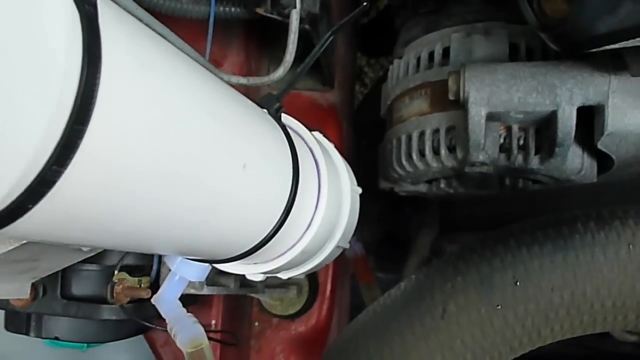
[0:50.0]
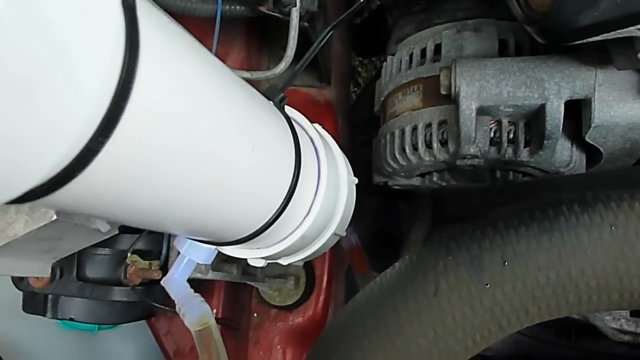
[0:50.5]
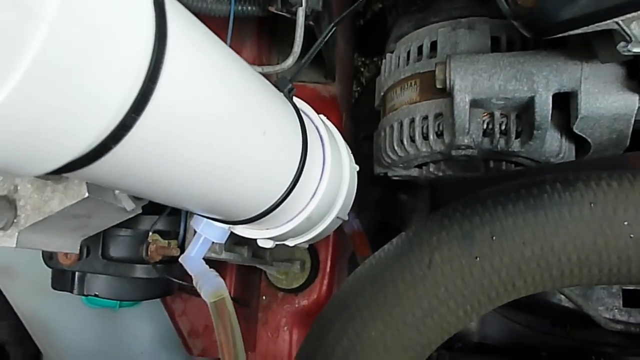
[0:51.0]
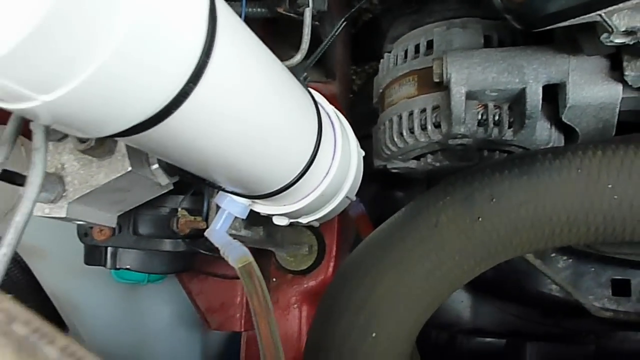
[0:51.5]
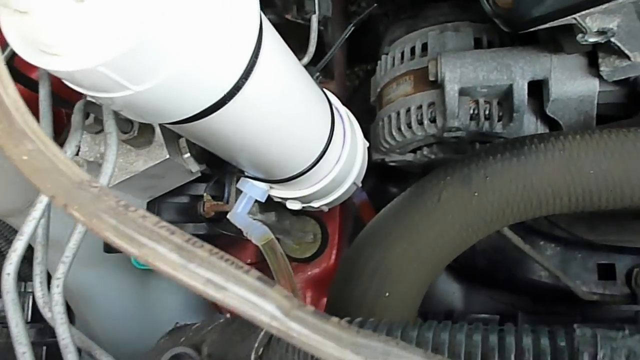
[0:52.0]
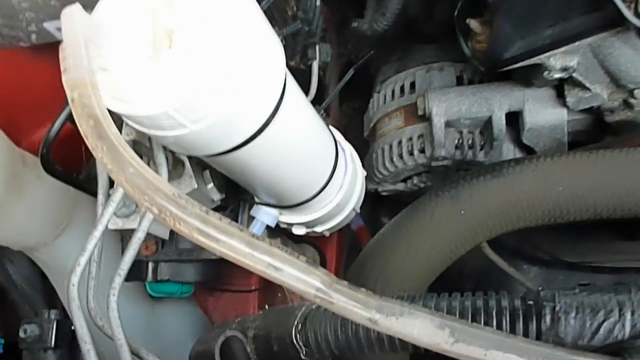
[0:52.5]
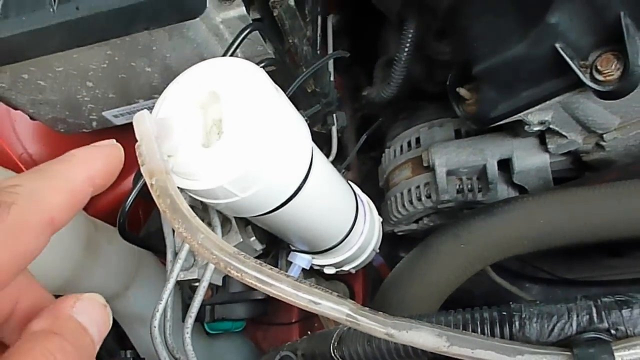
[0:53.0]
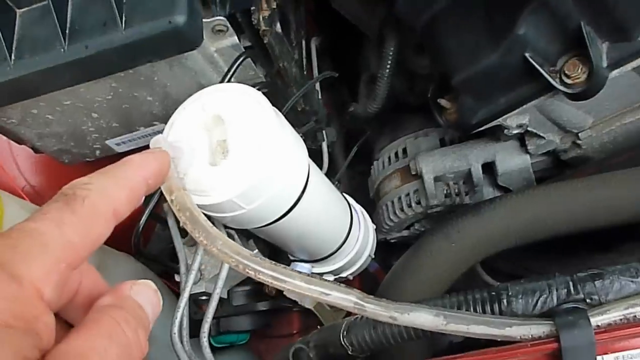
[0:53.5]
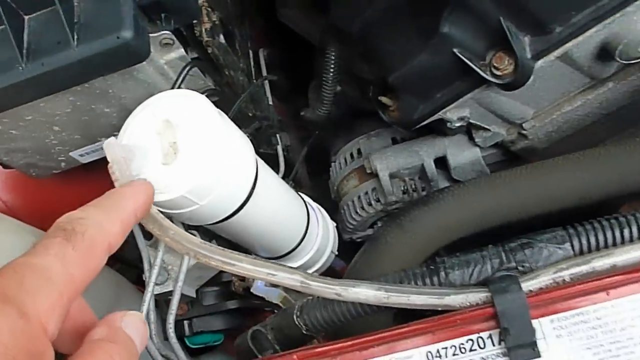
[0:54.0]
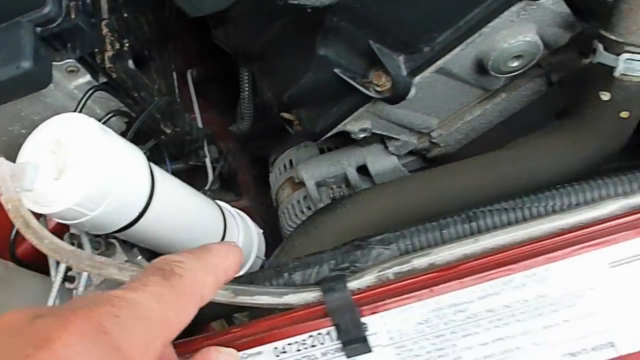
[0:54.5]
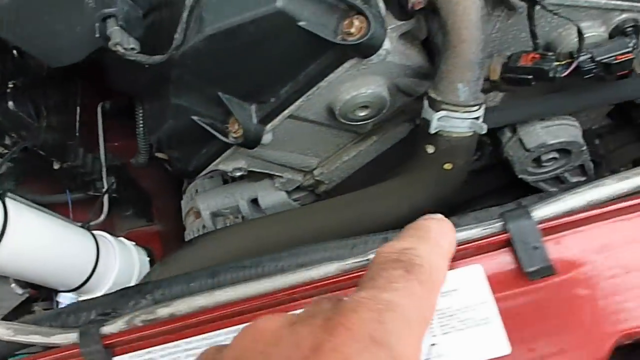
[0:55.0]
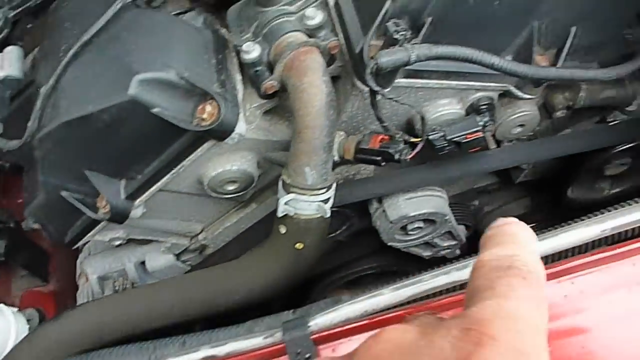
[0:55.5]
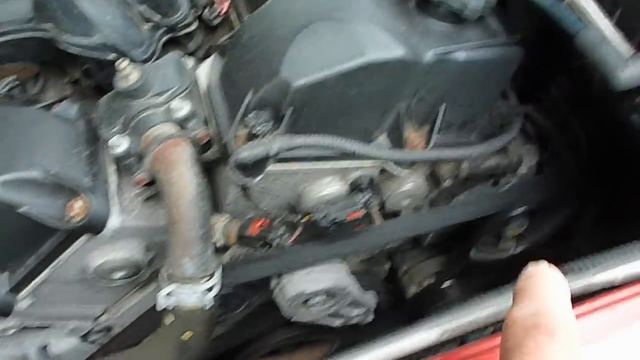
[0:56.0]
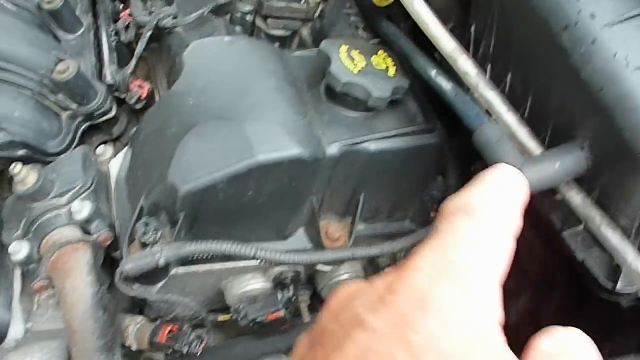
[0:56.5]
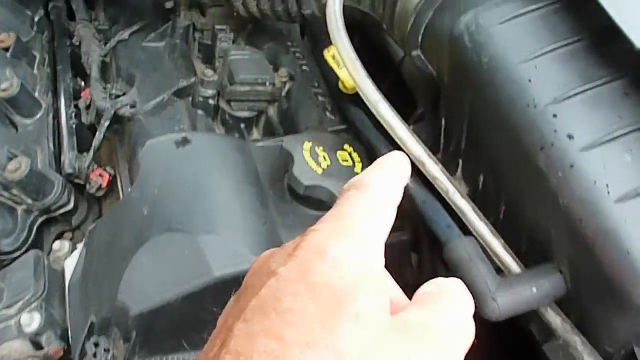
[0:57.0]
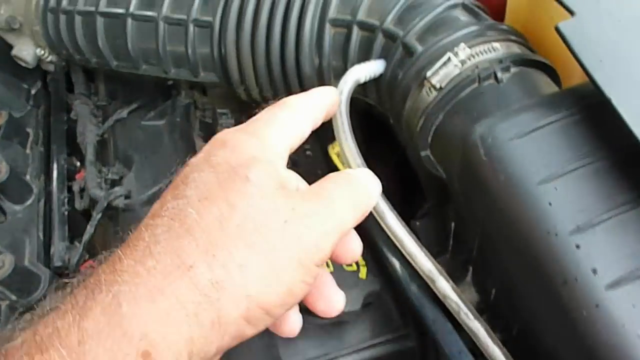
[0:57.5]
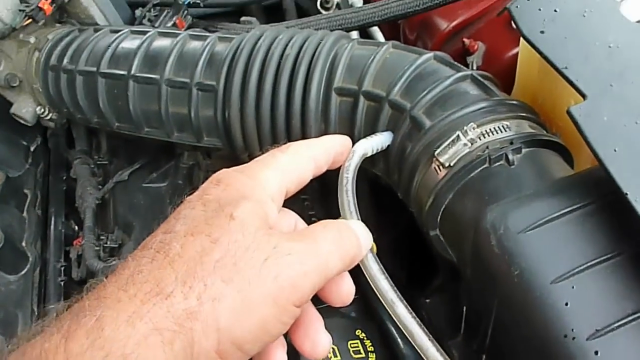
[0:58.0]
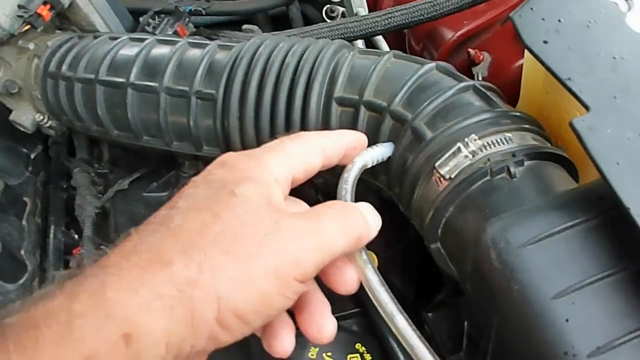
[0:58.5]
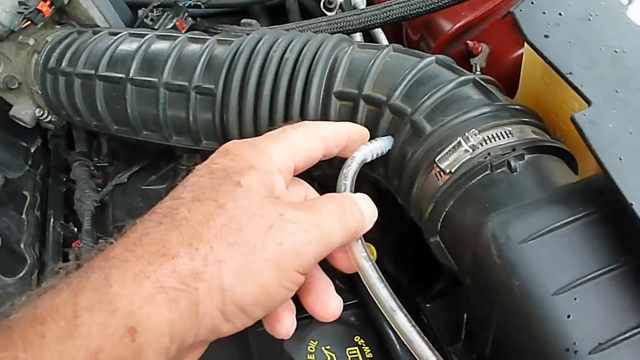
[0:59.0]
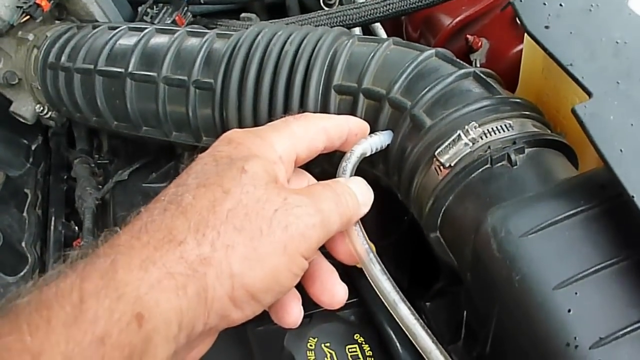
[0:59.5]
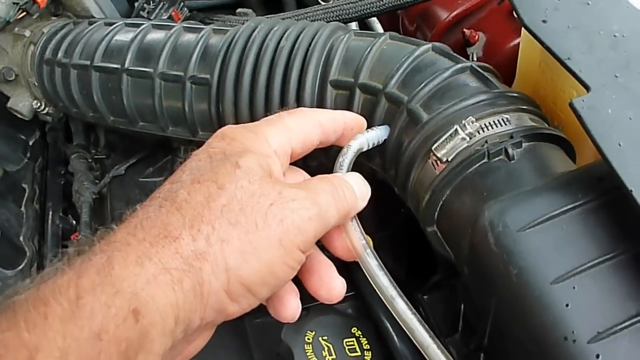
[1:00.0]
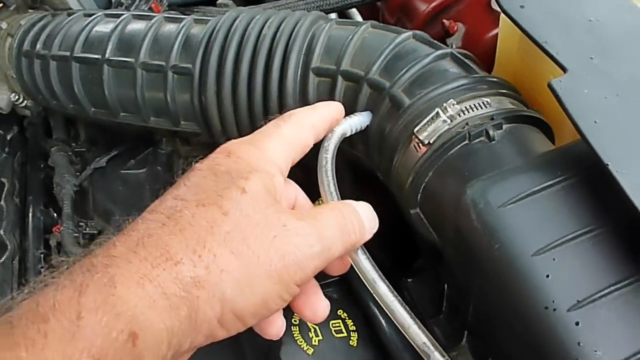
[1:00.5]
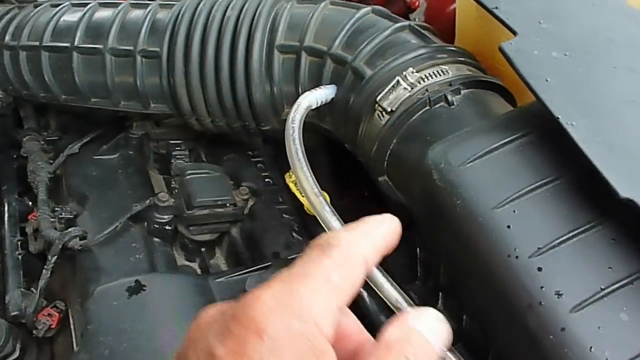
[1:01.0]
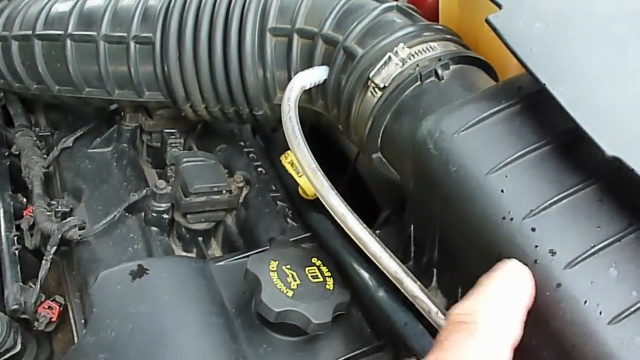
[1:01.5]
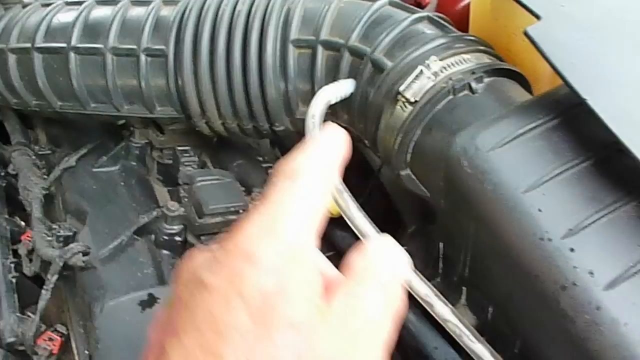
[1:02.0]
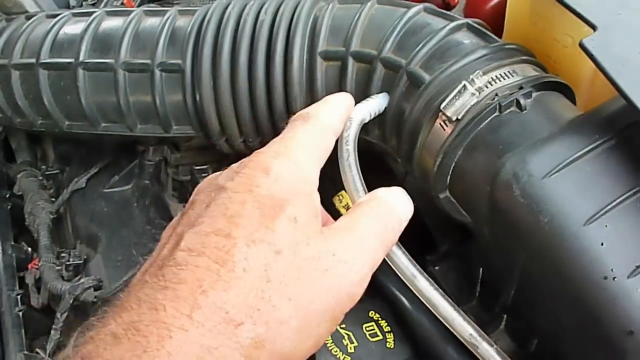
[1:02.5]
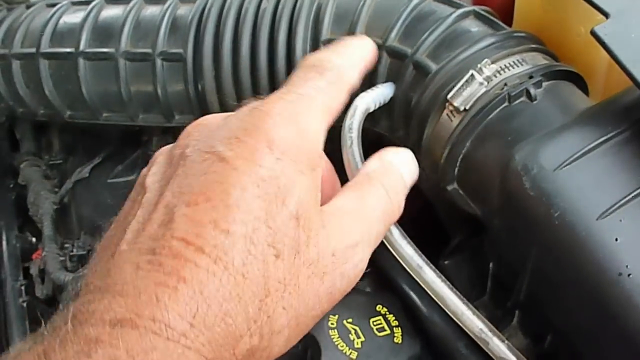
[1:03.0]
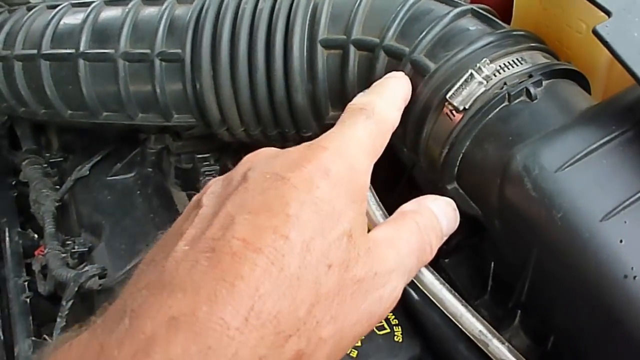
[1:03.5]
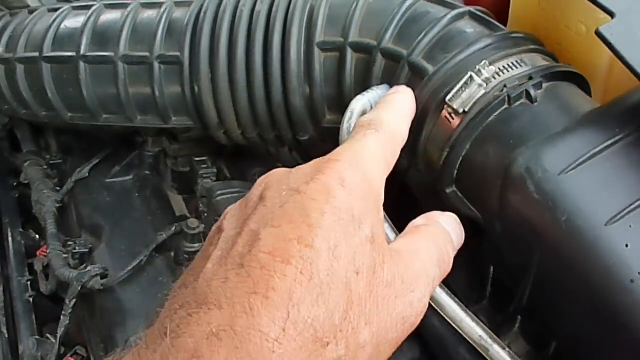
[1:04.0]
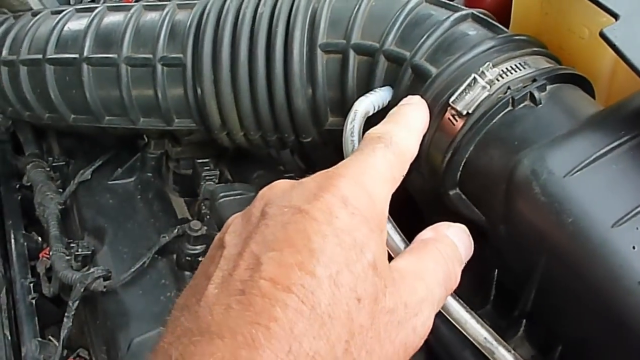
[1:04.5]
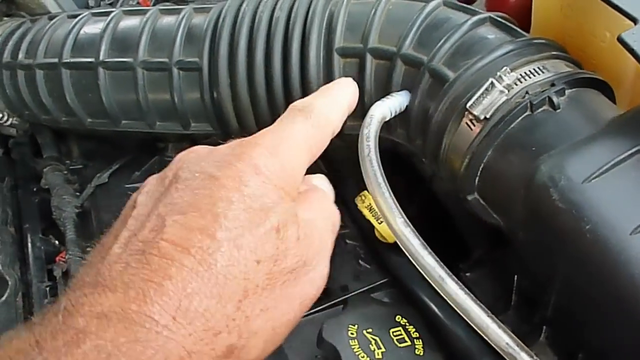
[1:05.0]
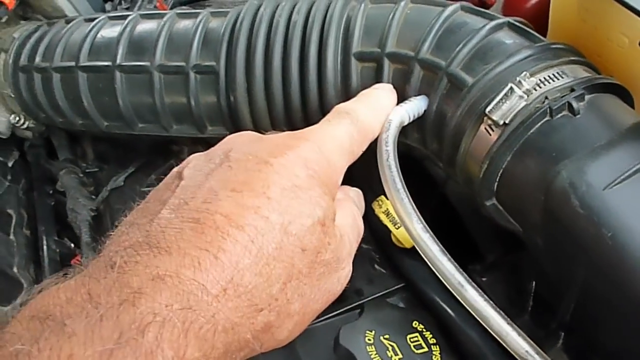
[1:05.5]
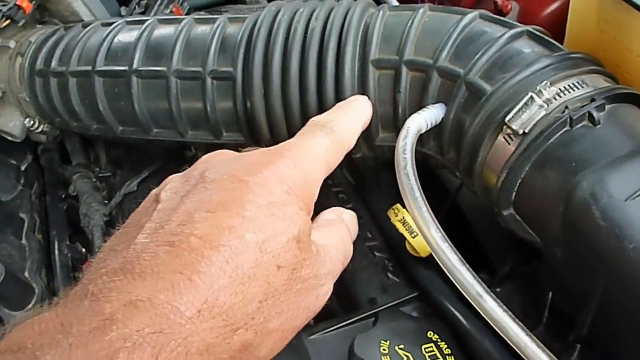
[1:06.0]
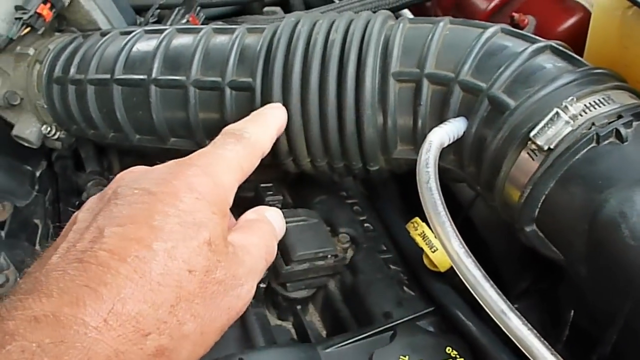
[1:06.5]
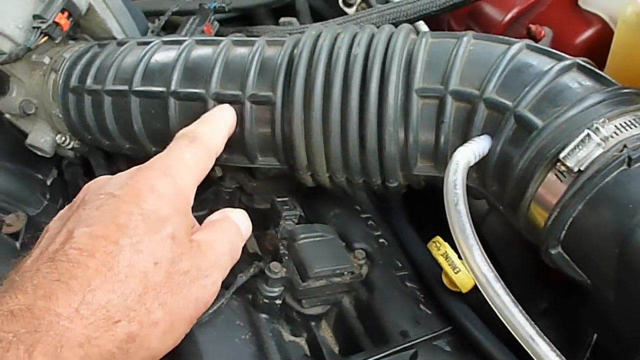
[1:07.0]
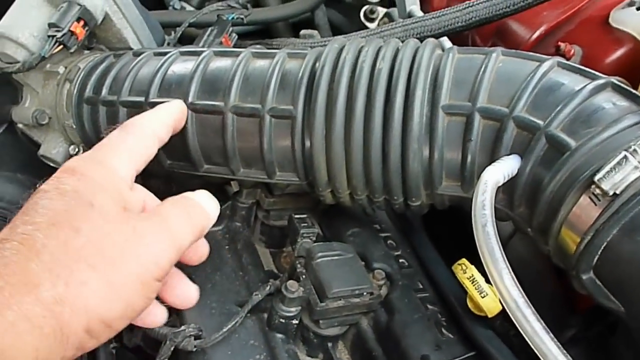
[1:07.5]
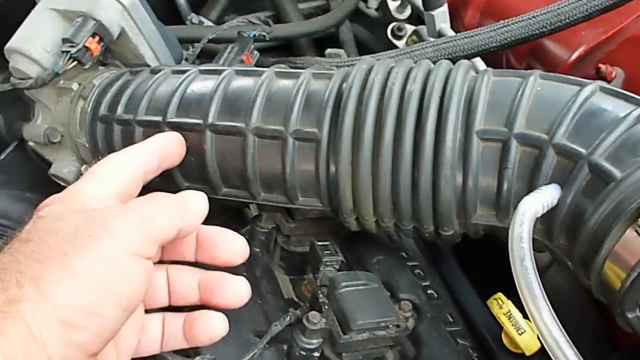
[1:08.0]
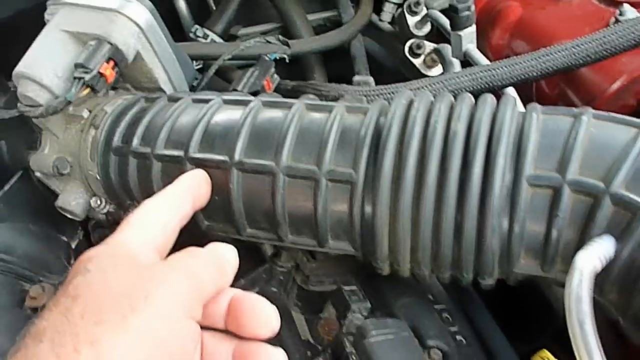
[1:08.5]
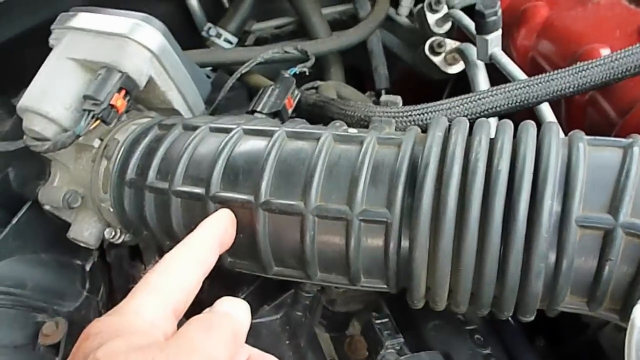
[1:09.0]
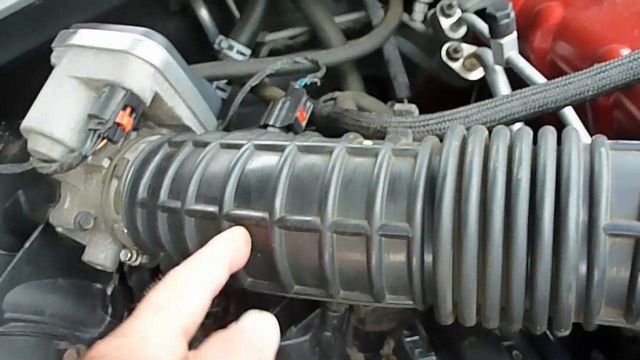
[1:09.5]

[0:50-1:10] The man goes to the top of the white tube and the camera pans out a little, revealing a clear plastic tube. It runs along the front of the vehicle inside under the hood, then up the right side of the engine compartment, and connects into a large black plastic tube. He runs his hand along the tube and points out a large plastic block on the right side, maybe some sort of intake filter.